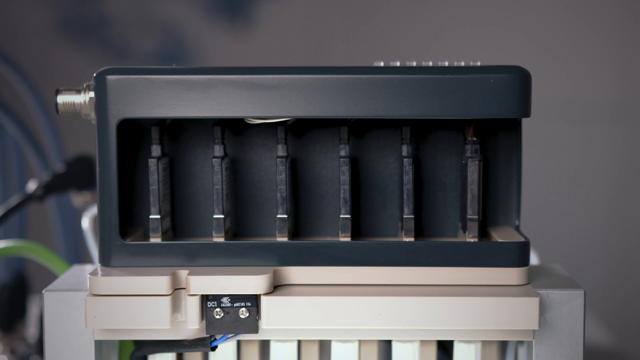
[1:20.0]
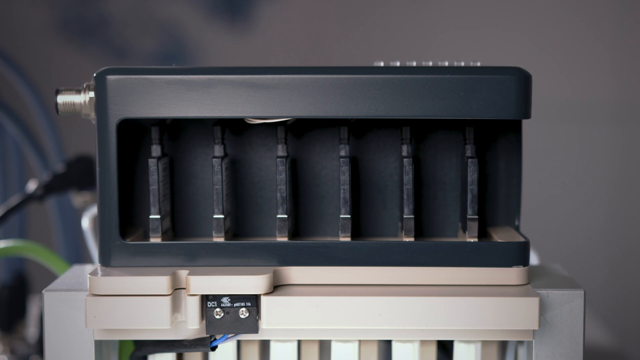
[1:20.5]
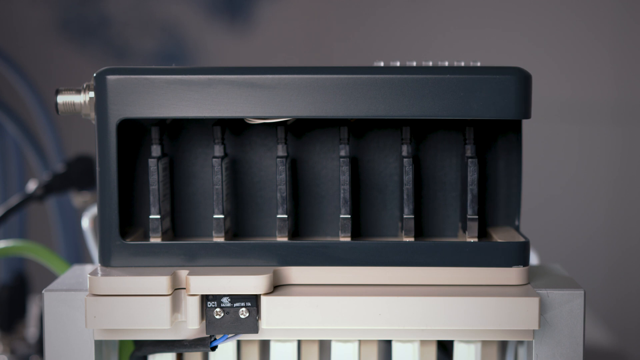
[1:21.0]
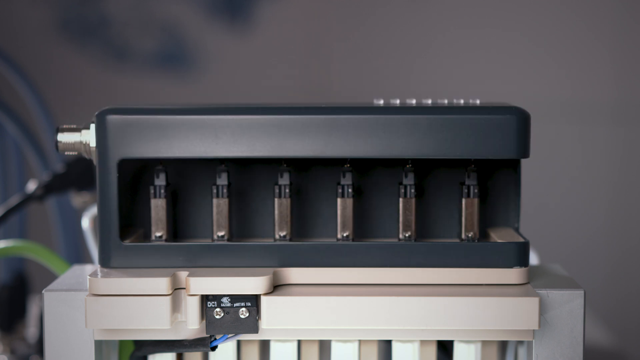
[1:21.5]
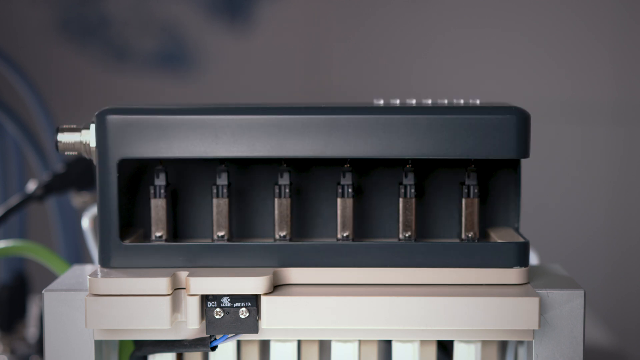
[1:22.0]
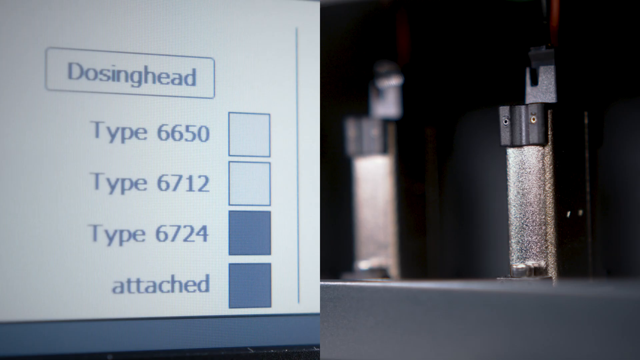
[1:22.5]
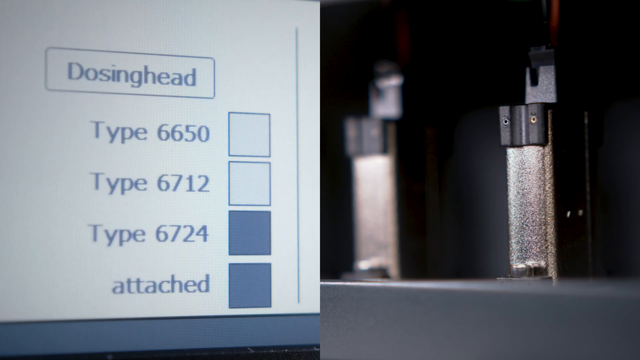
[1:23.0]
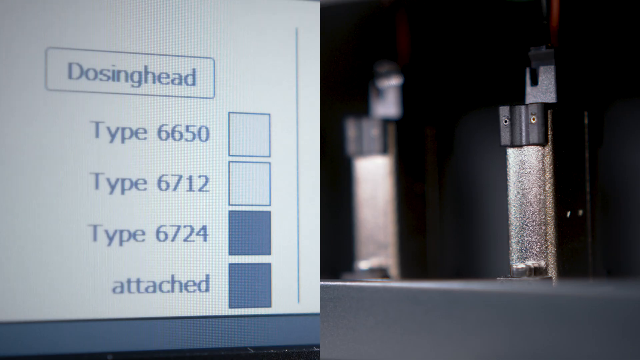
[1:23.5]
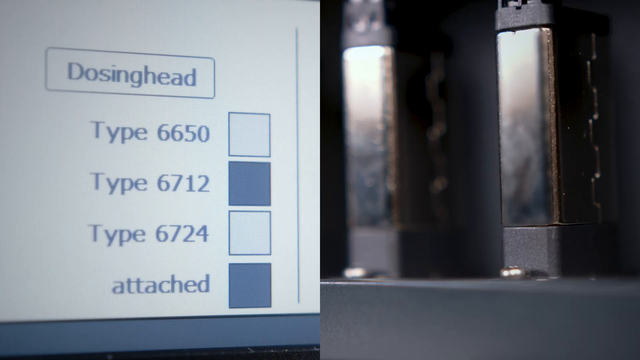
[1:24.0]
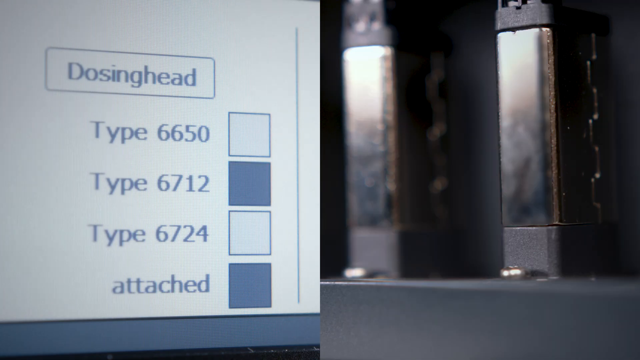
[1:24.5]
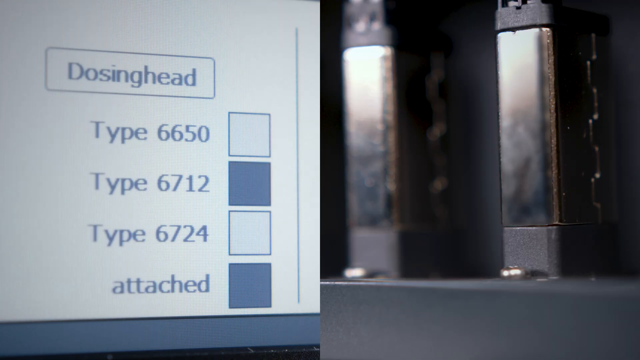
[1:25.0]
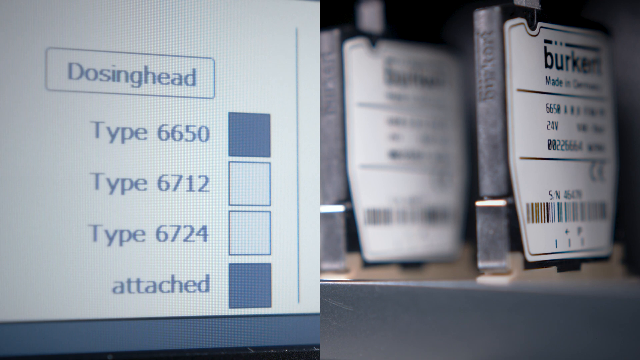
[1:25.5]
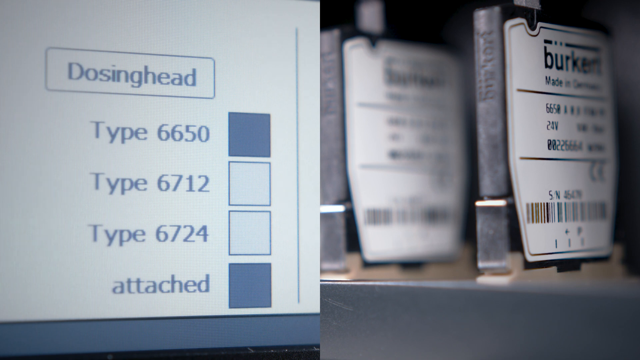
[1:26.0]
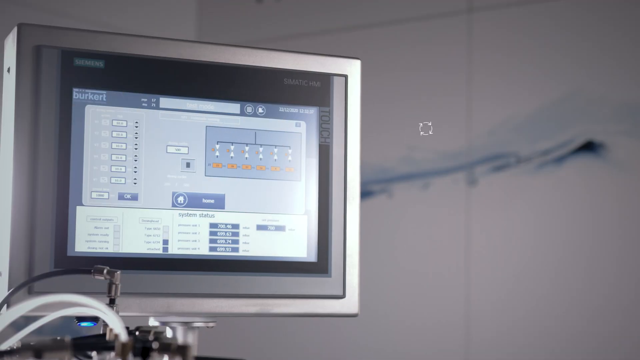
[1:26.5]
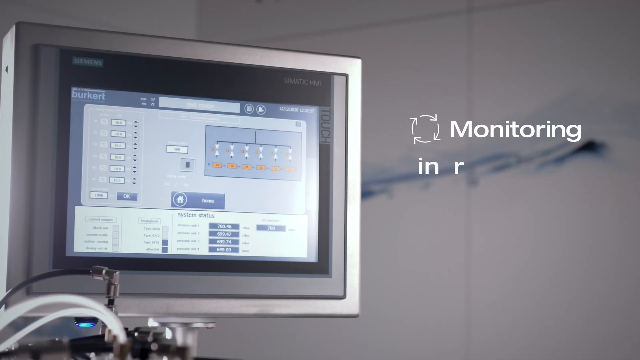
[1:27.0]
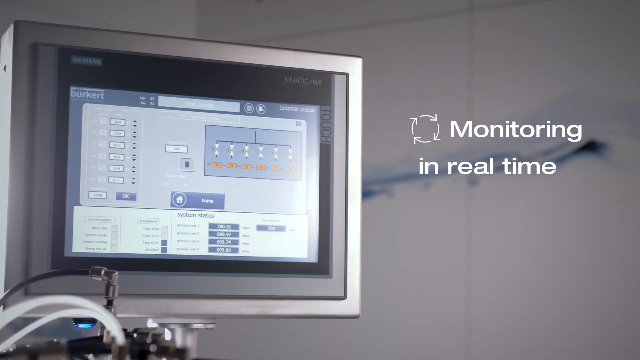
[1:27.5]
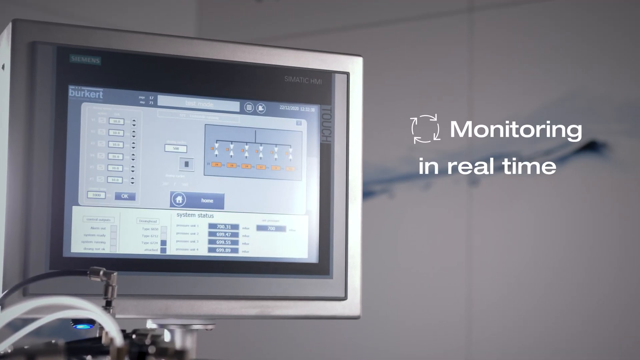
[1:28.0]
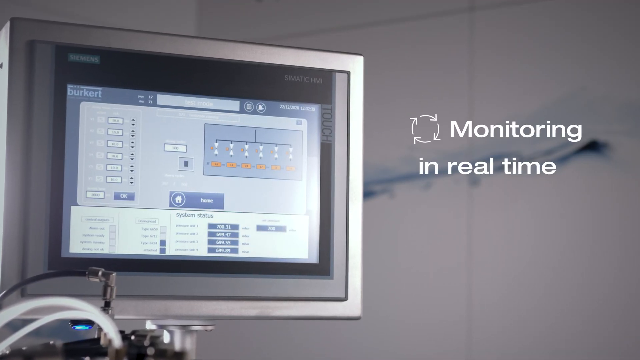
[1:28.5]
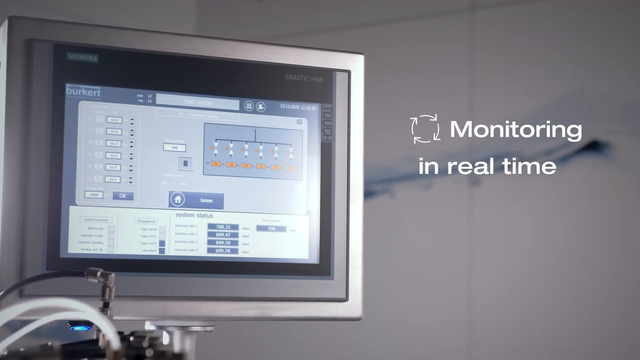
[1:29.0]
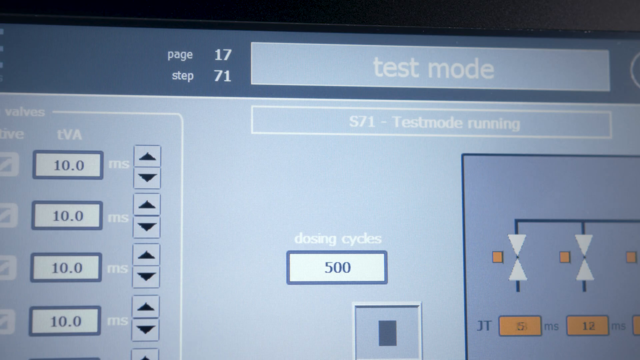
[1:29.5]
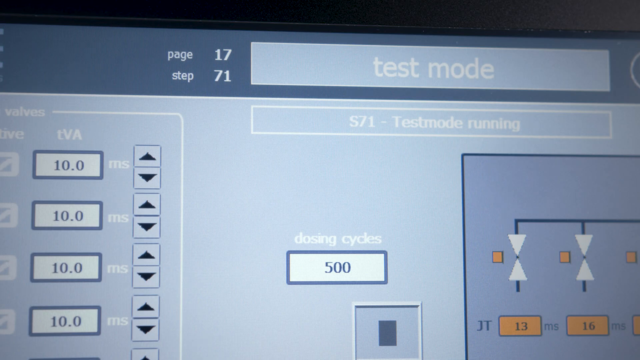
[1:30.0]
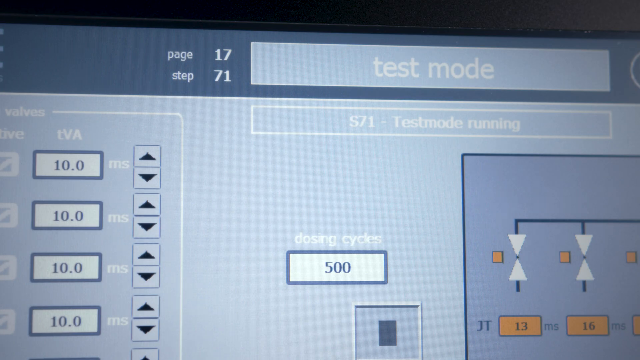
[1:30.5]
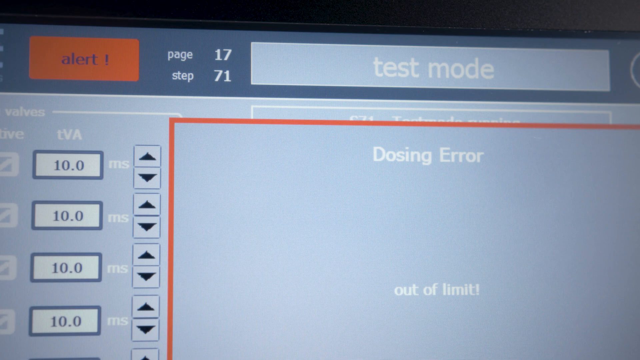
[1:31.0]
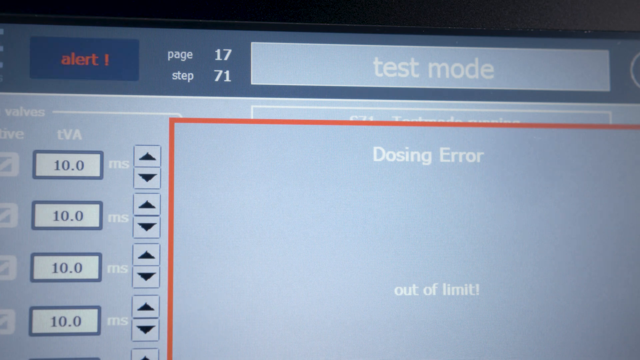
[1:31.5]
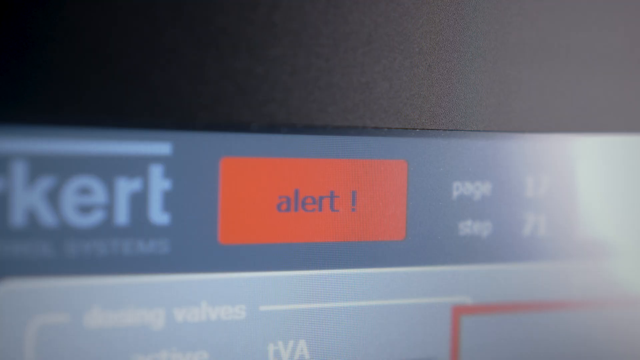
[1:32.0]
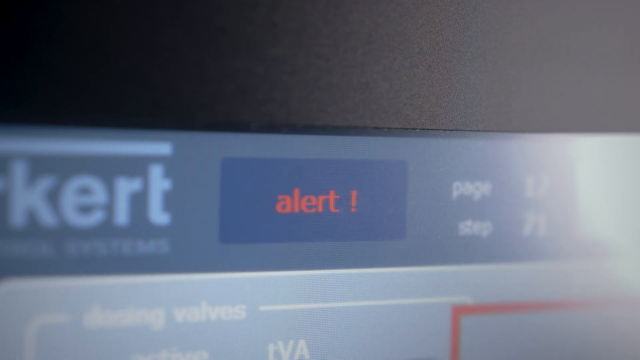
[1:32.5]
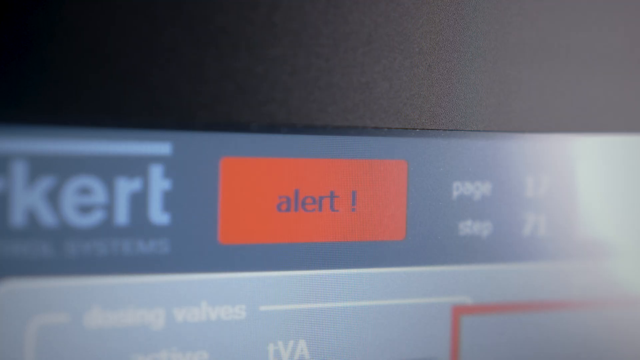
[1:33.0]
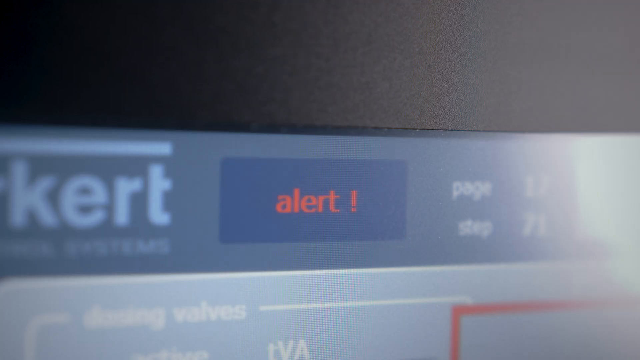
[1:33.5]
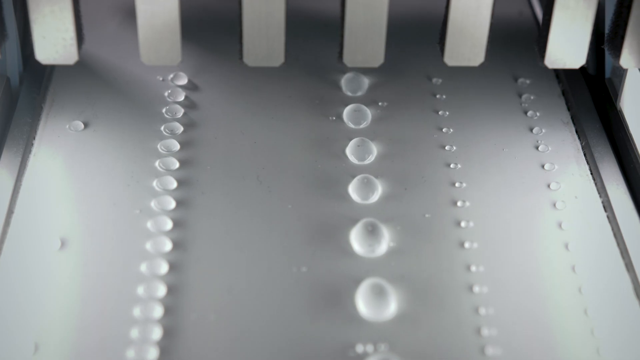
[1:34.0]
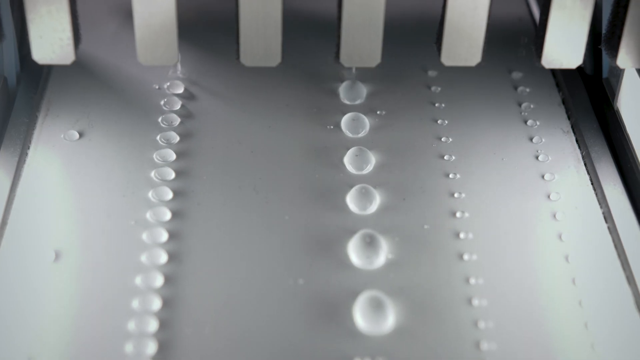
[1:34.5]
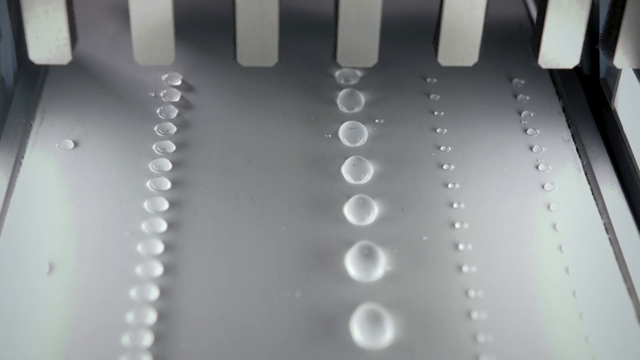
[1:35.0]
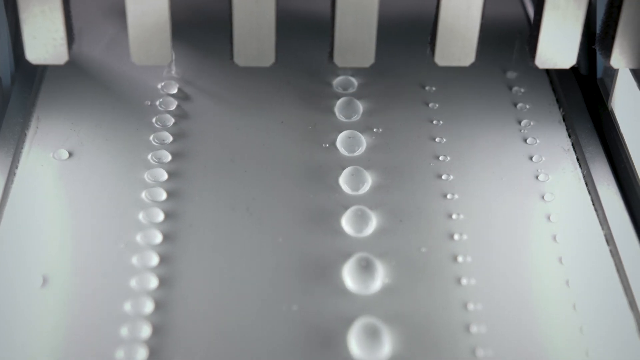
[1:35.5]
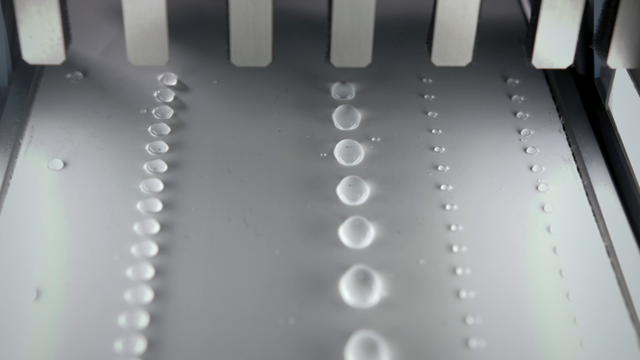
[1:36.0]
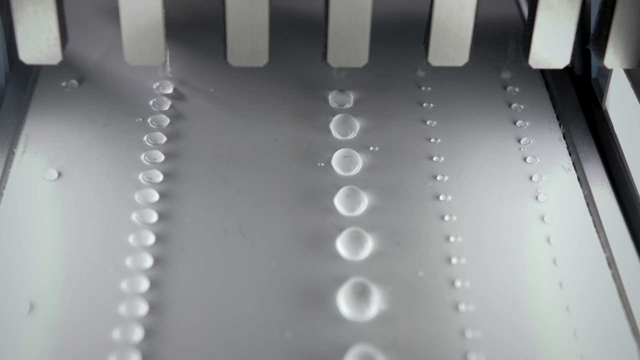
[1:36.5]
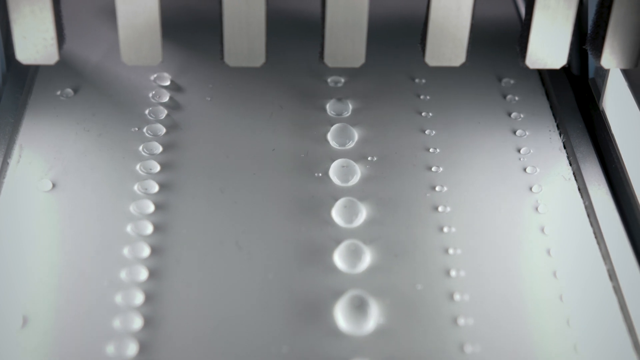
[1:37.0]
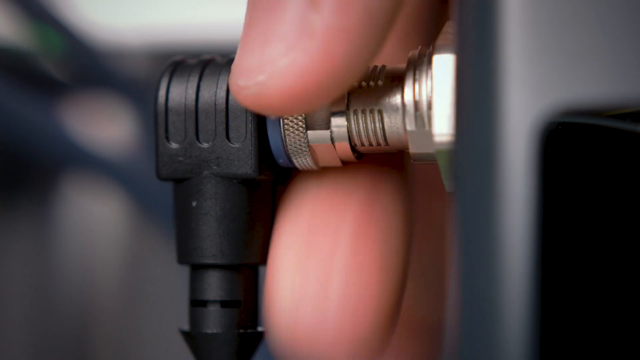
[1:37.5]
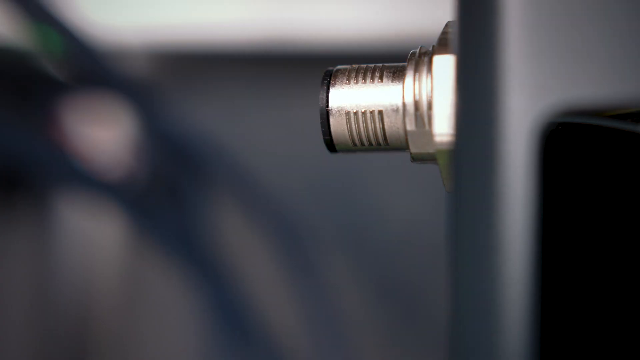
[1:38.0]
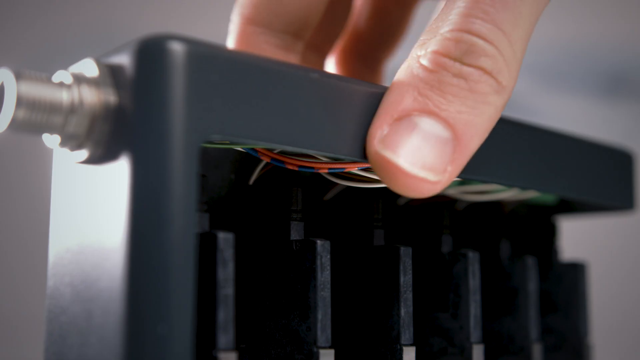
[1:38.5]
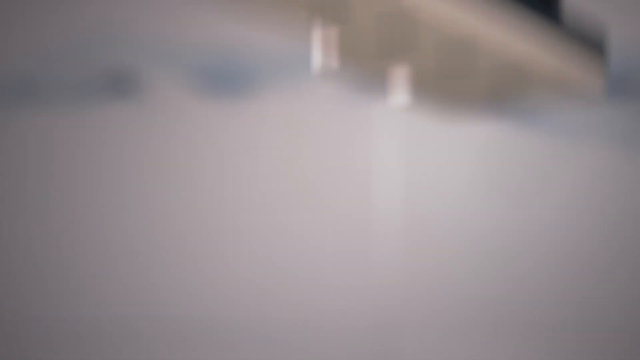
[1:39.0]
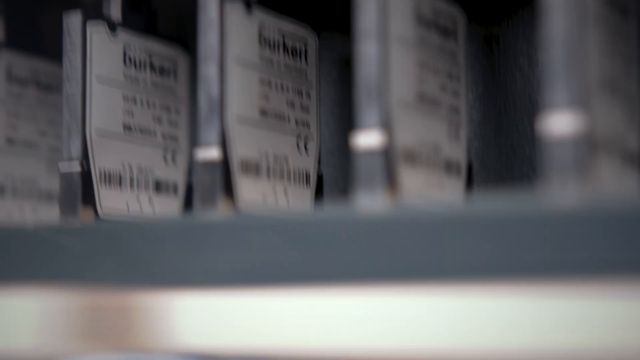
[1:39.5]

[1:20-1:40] A device used for some DNA testing or results is shown. On the back of the machine is a dosing head listing "type 6650," below that "type 6712," below that "type 6724," and at the bottom "attached." Squares are beside each of these: the top two are gray and the bottom two are a darker gray or black. The text "monitoring in real time" appears, along with "dosing cycles 500" and "test mode s71 test mode running." As the machine runs, an alert button is on, reading "alert one." The testing area has a flat surface where the little dots are being put, some larger and some much tinier, placed symmetrically by the machine.